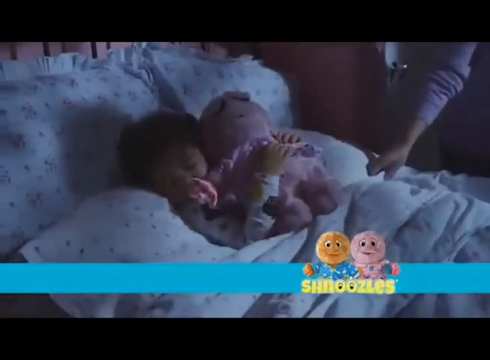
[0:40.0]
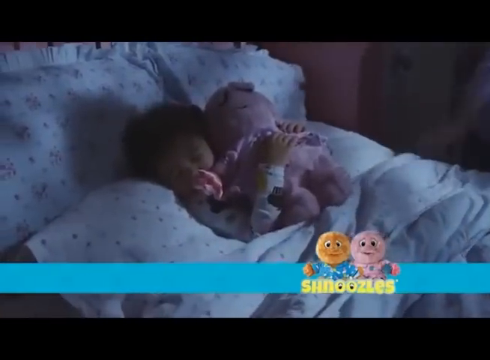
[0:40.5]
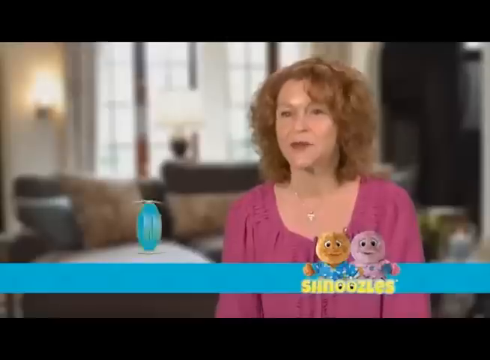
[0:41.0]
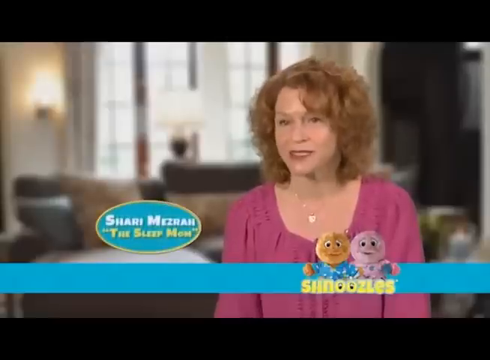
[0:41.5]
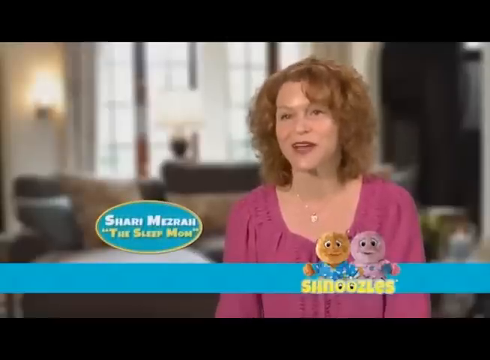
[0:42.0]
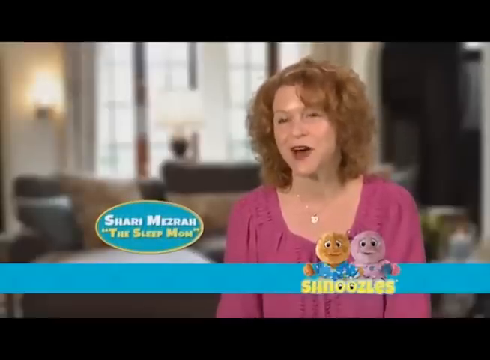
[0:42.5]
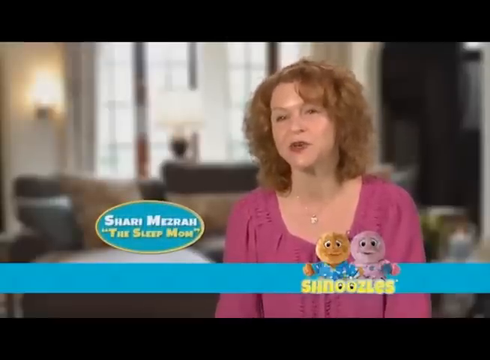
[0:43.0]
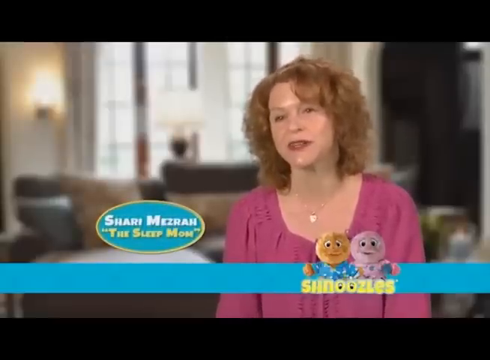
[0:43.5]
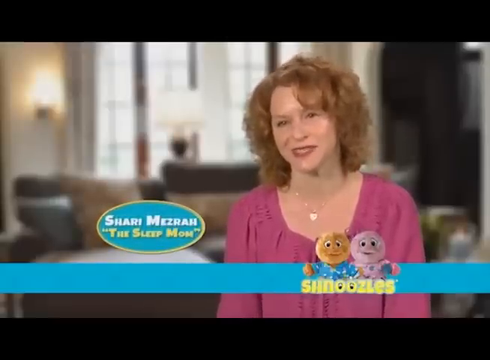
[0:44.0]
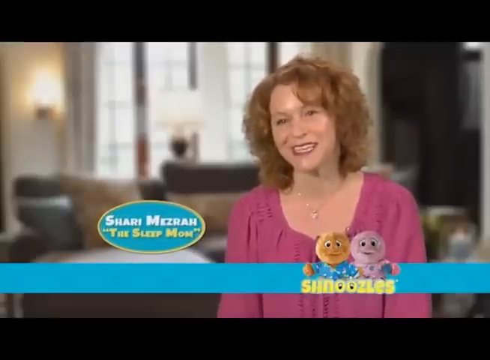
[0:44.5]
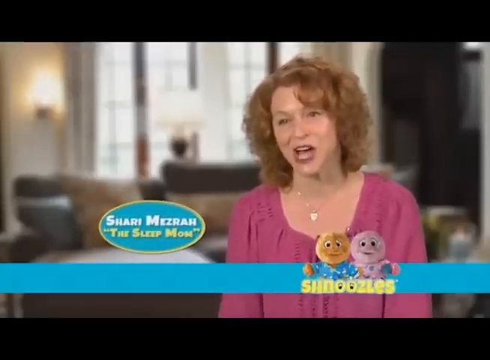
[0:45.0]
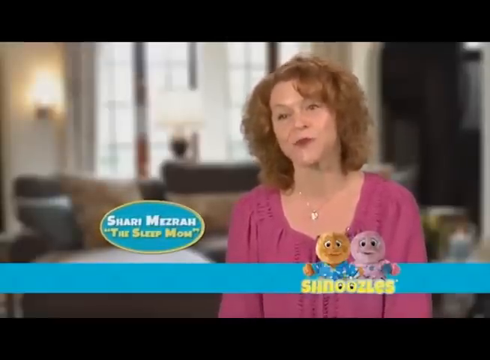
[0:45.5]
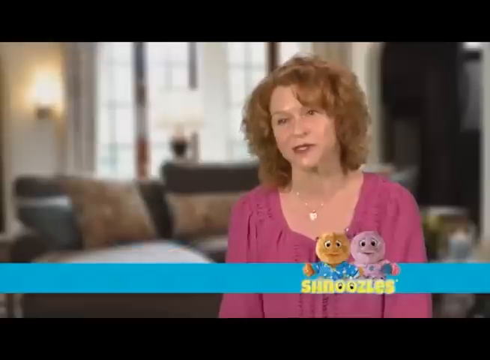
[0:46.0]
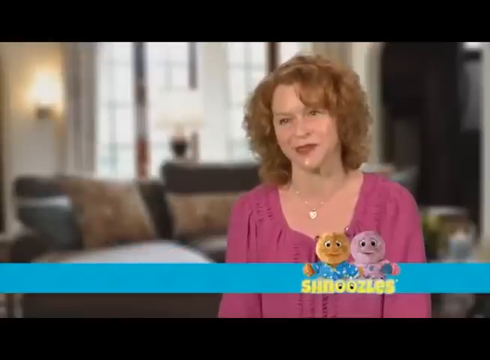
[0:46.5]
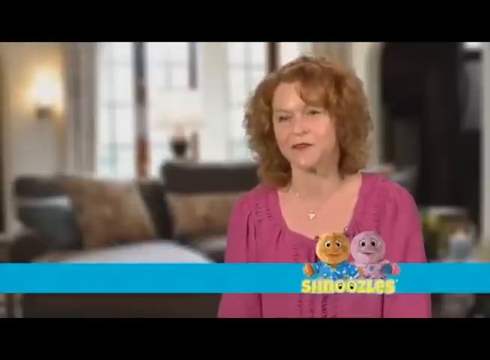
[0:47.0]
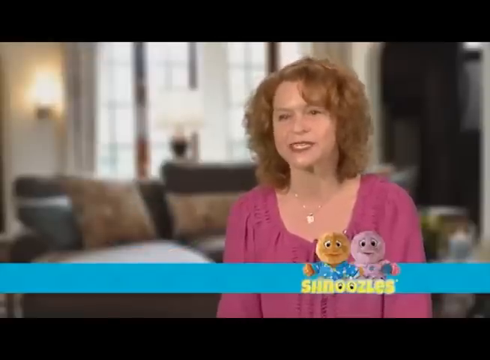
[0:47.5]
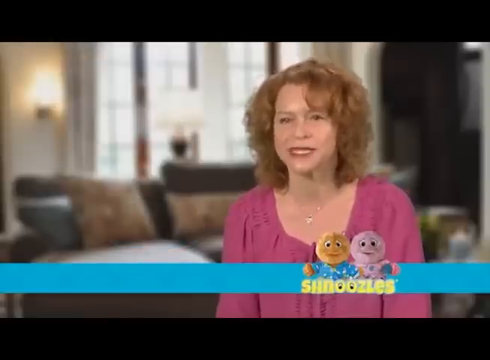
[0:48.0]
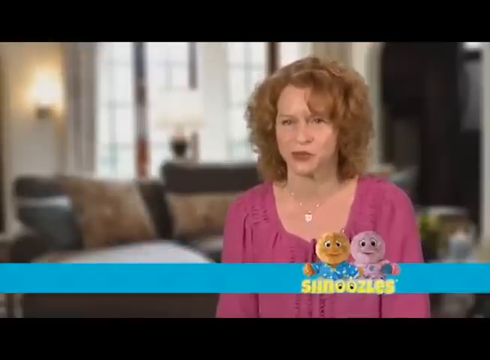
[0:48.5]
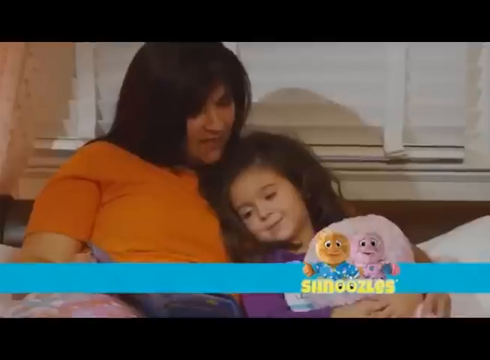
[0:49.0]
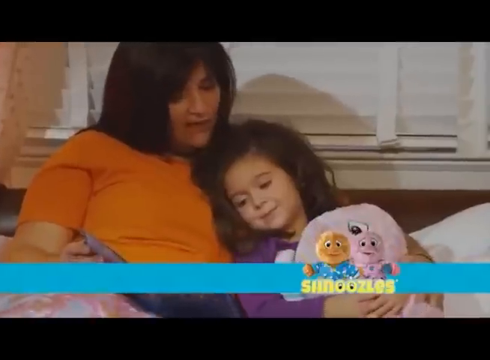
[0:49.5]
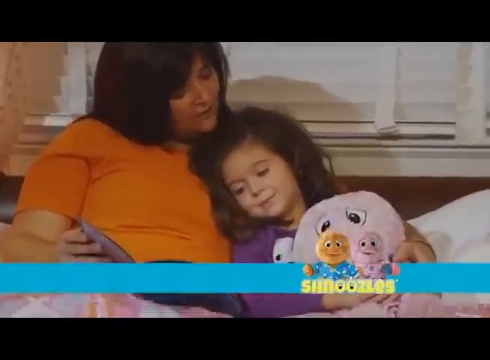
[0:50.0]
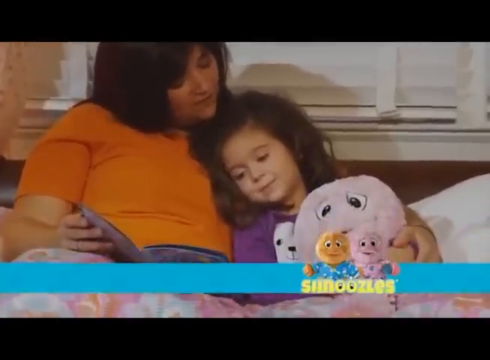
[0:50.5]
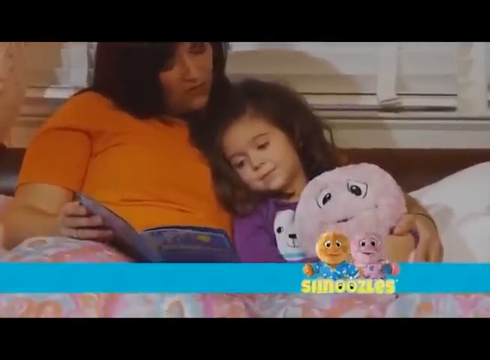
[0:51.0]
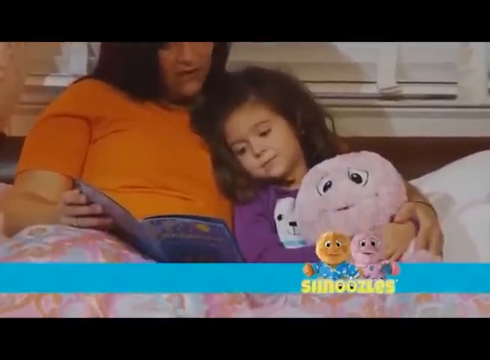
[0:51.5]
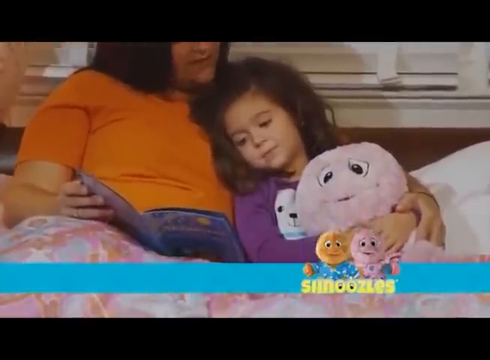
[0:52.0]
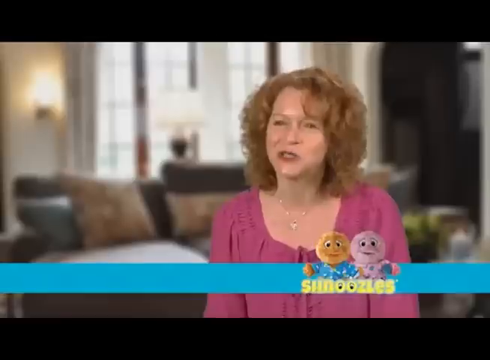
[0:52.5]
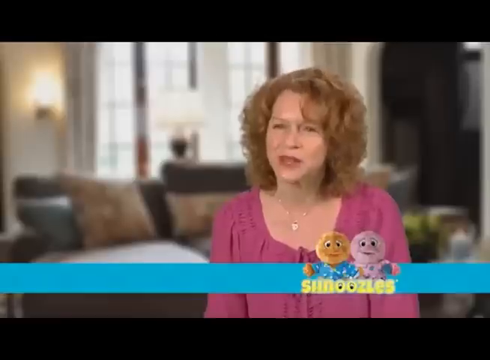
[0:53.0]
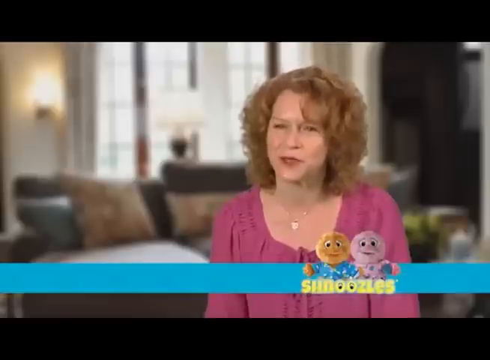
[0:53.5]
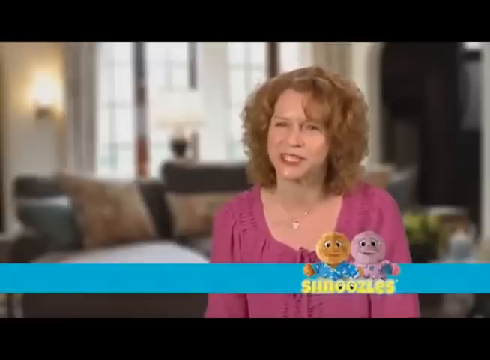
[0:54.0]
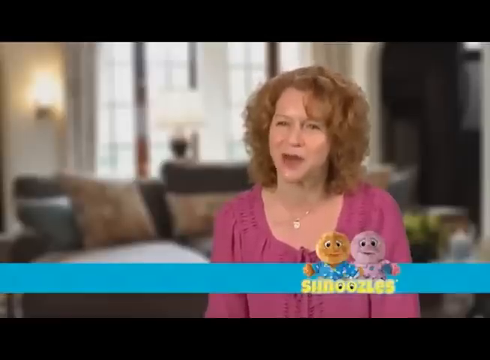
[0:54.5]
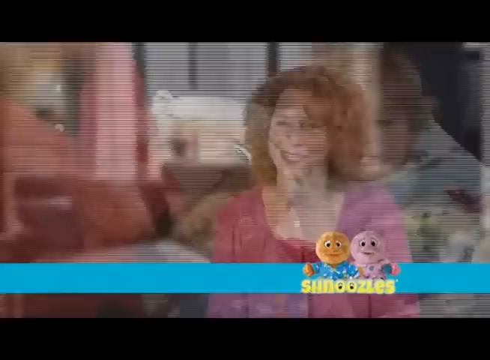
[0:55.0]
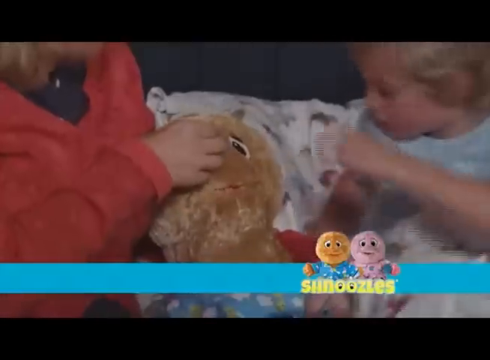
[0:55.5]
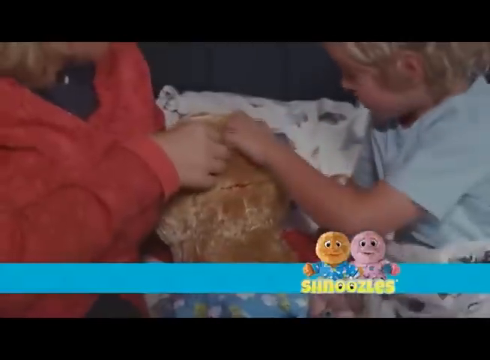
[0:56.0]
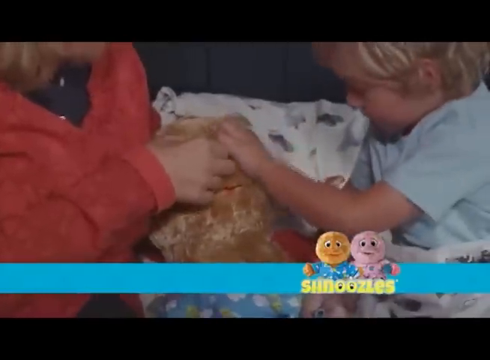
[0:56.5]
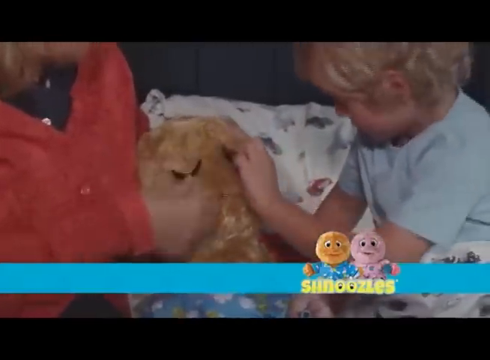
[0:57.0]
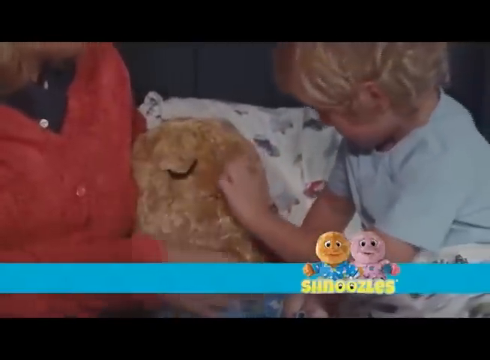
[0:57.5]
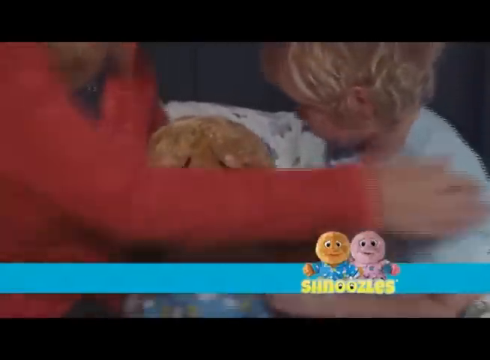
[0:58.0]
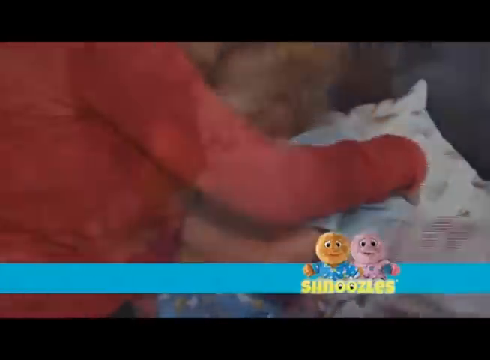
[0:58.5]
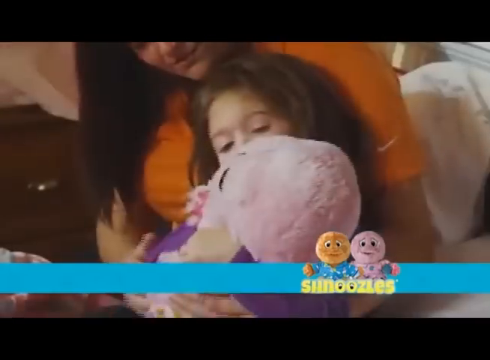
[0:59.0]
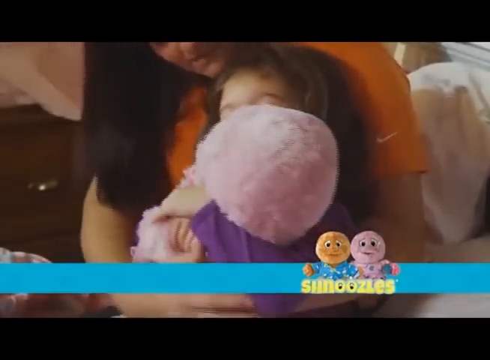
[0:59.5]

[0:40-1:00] A child is lying down with her shnoozle. A woman named Sherry, the creator of the product, appears with the text "Sherry Mesra", identifying her as the sleep mom. She has brownish orange curly hair and is talking and smiling. A blue rectangle runs all the way across the advertisement from left to right, with a picture of the shnoozle stuffed animals in the lower right-hand corner: a brown one wearing blue pajamas and a pink one wearing pink pajamas.